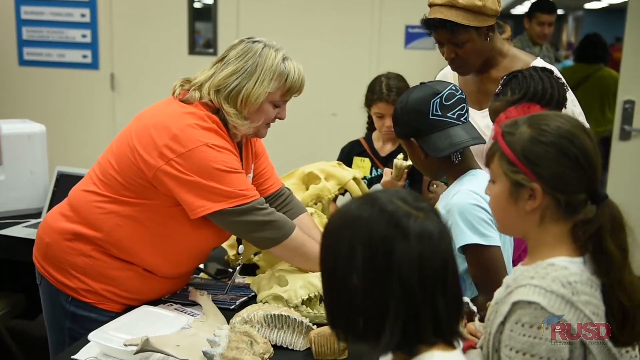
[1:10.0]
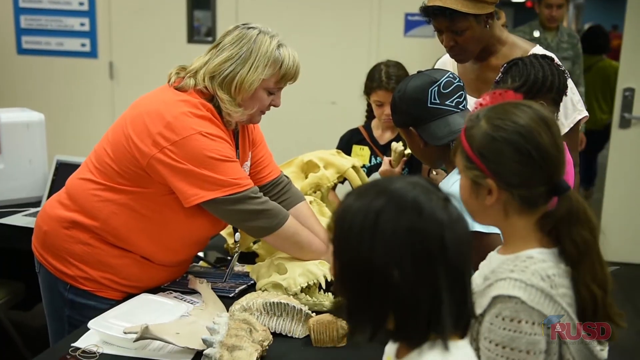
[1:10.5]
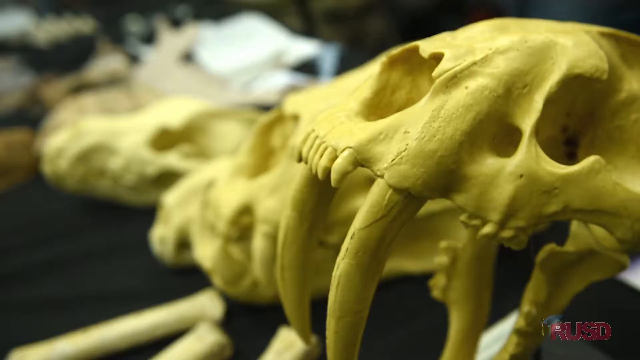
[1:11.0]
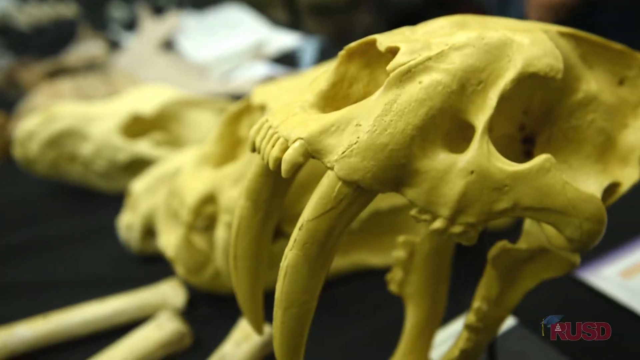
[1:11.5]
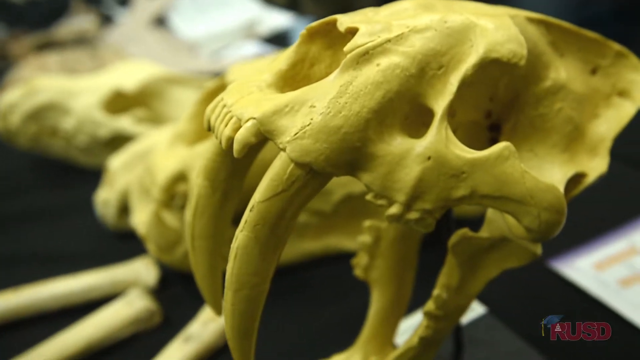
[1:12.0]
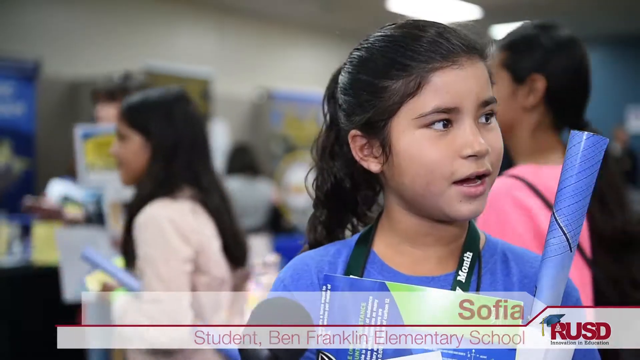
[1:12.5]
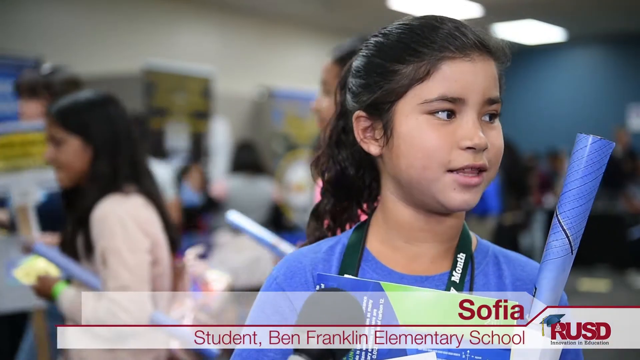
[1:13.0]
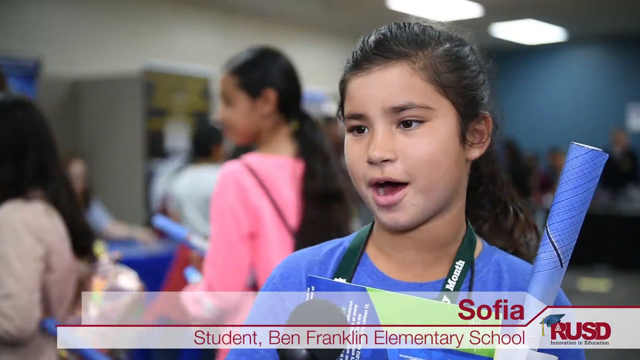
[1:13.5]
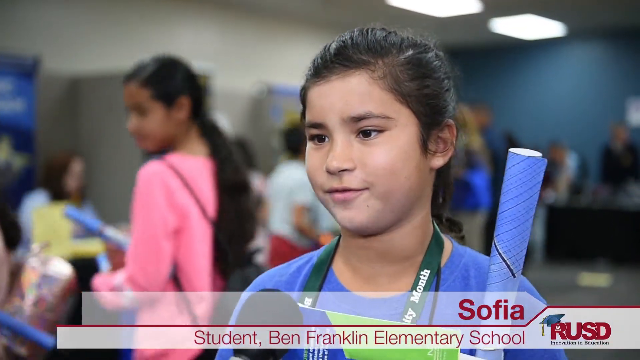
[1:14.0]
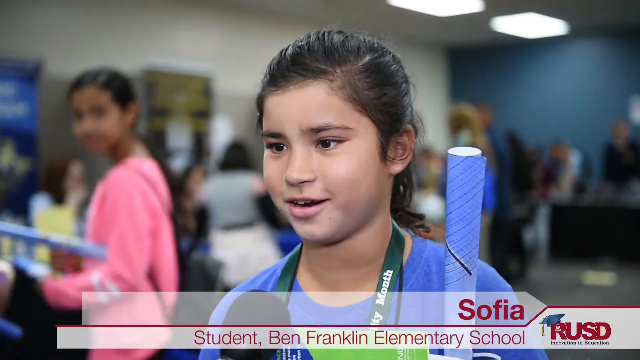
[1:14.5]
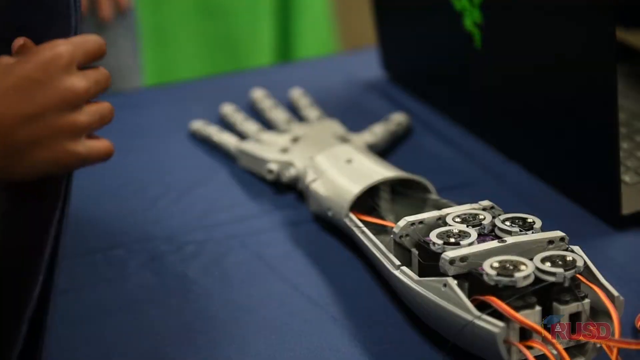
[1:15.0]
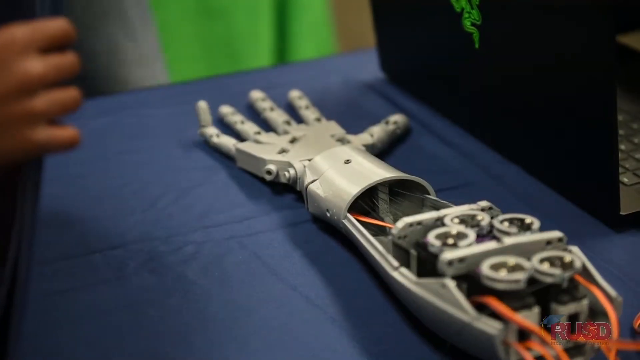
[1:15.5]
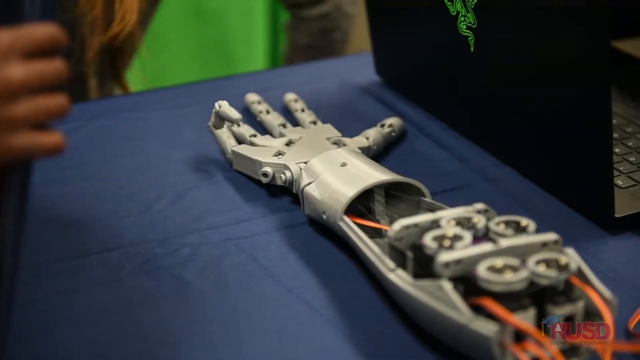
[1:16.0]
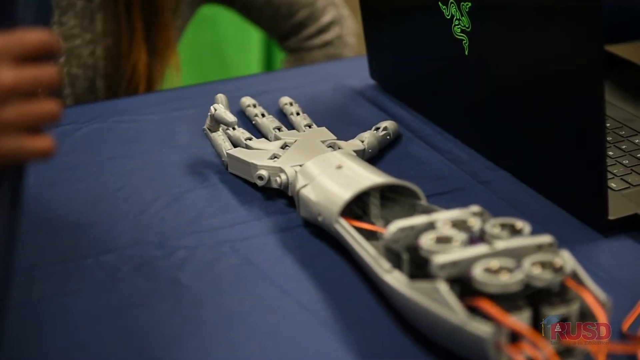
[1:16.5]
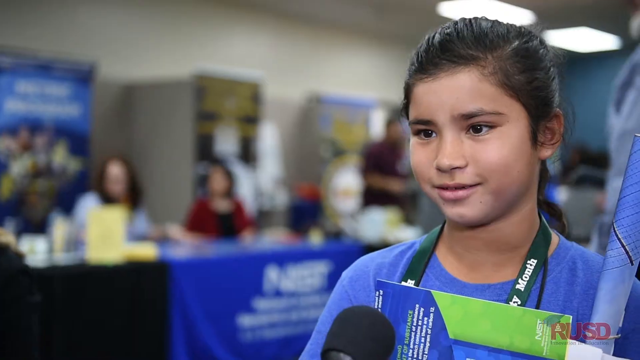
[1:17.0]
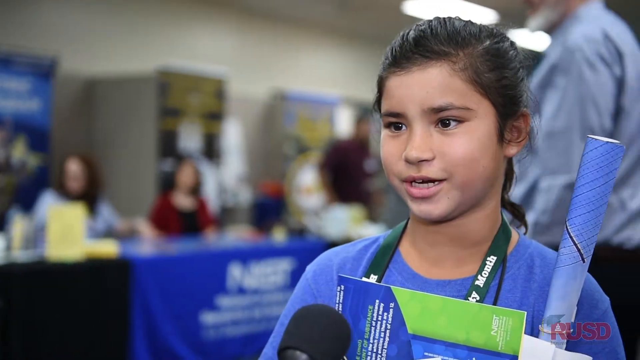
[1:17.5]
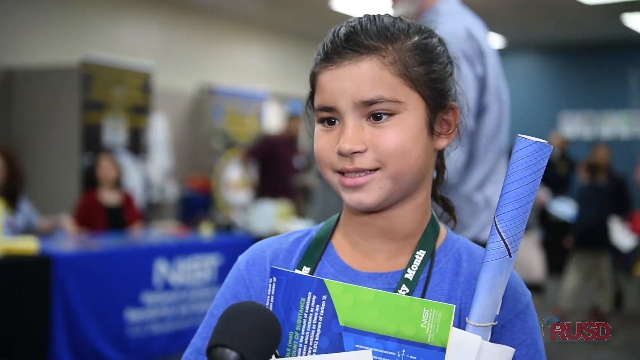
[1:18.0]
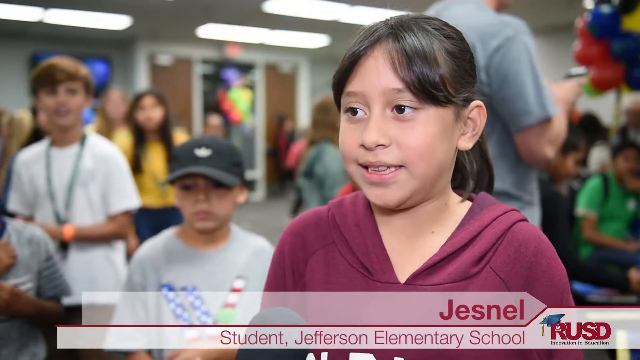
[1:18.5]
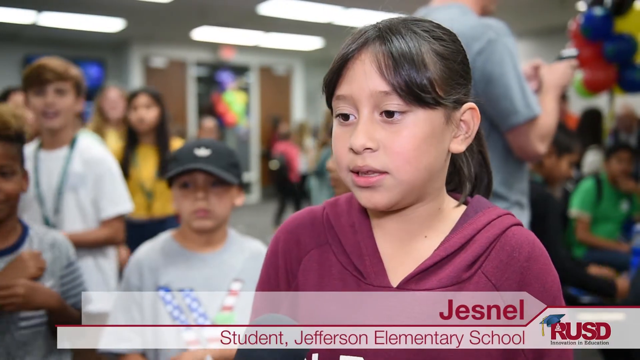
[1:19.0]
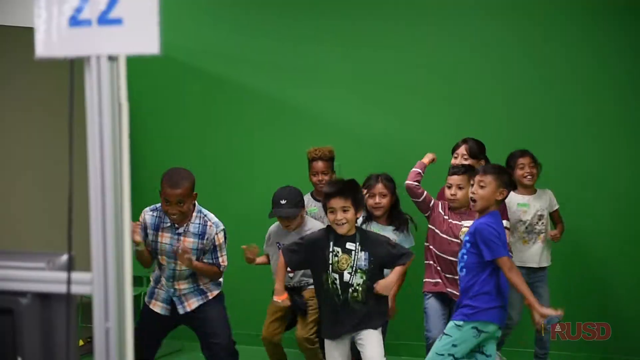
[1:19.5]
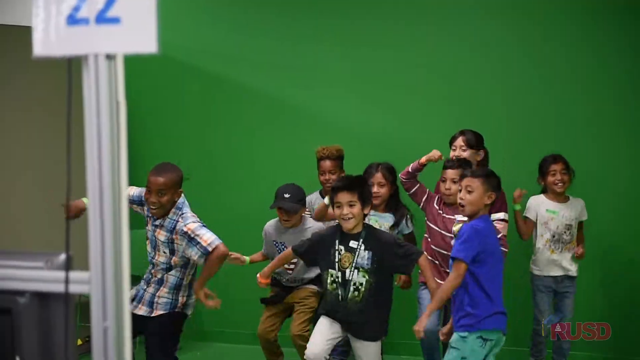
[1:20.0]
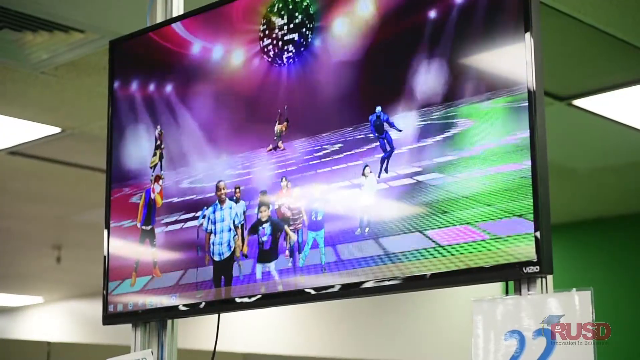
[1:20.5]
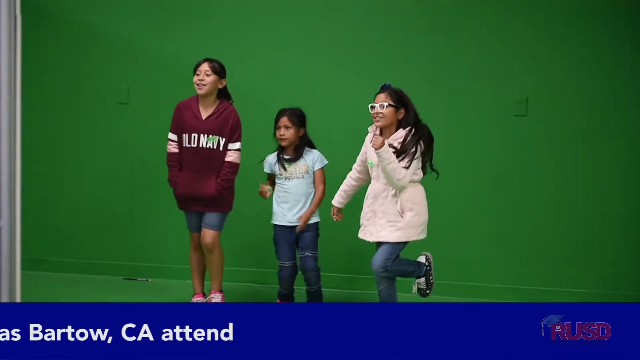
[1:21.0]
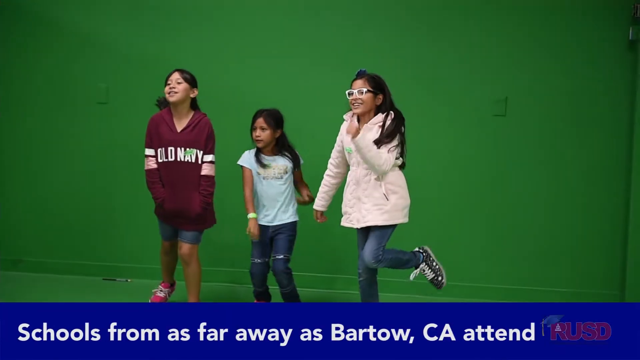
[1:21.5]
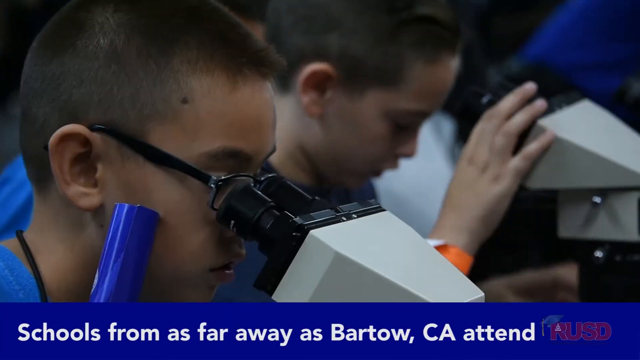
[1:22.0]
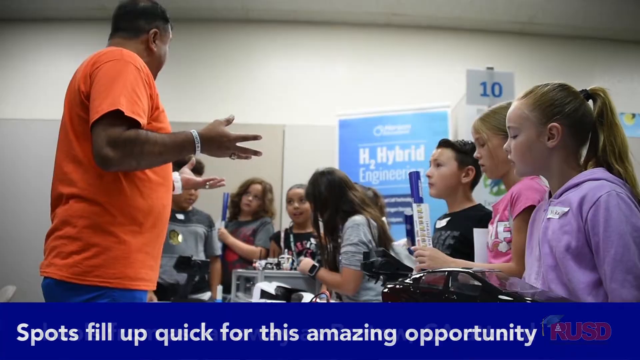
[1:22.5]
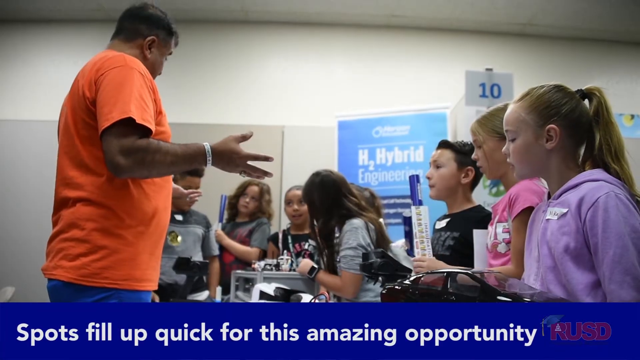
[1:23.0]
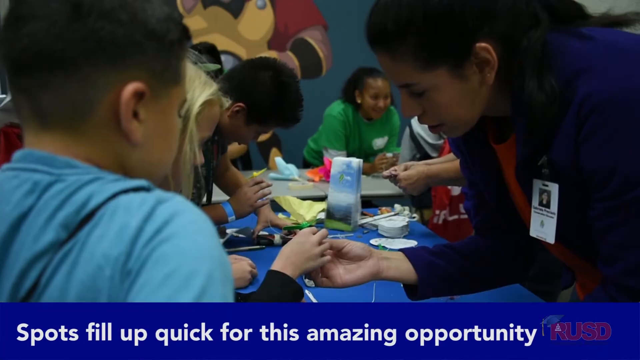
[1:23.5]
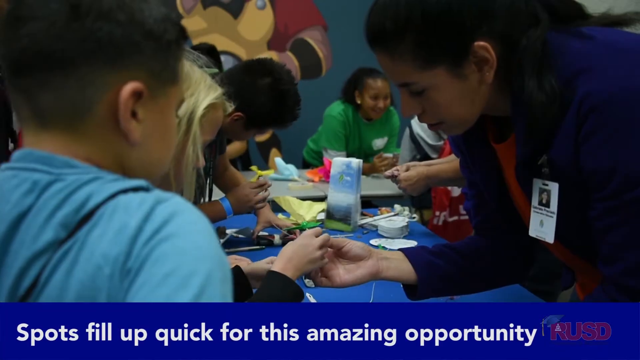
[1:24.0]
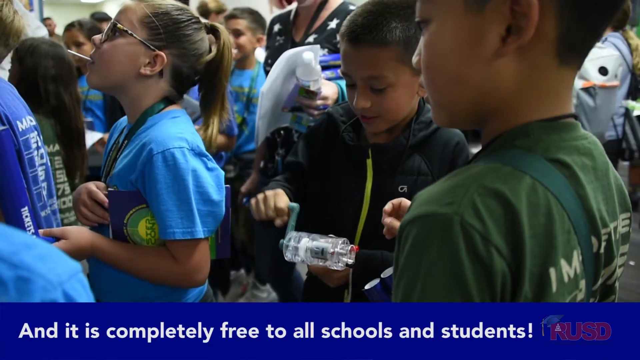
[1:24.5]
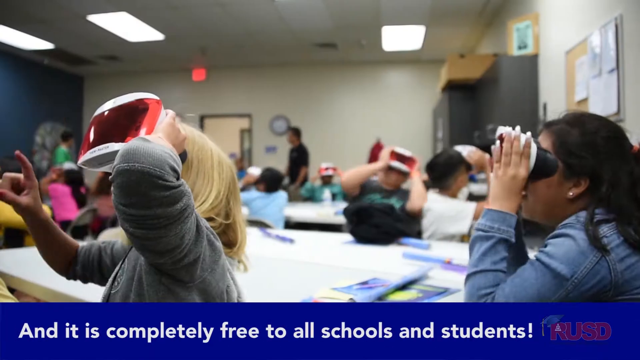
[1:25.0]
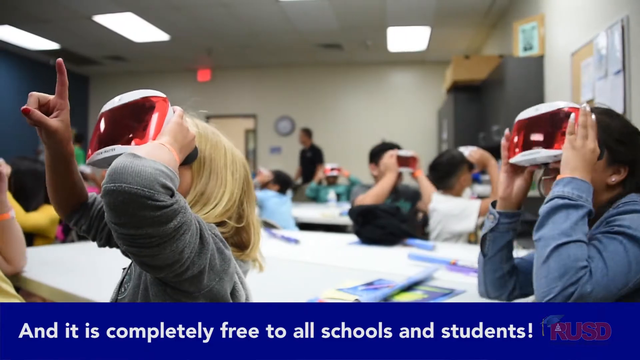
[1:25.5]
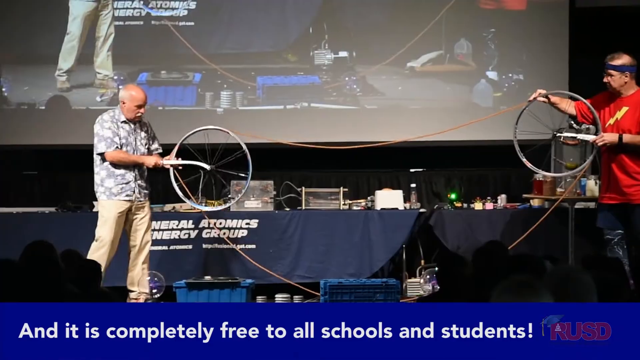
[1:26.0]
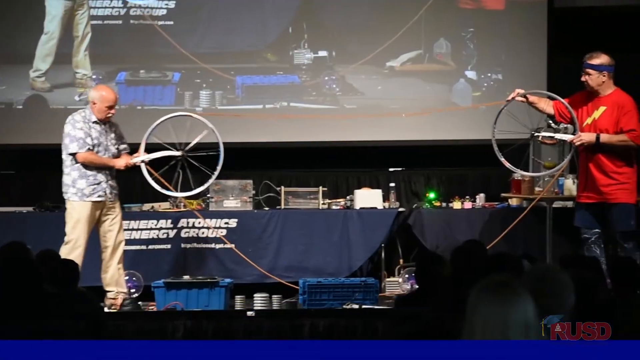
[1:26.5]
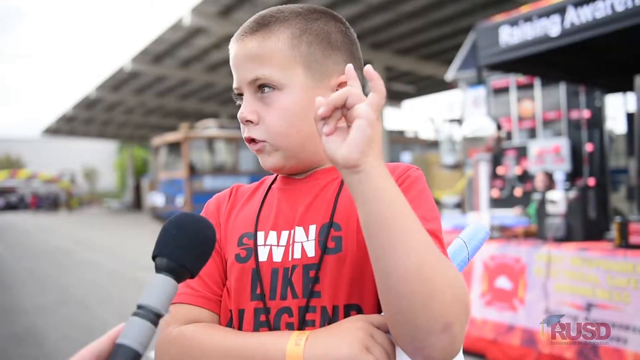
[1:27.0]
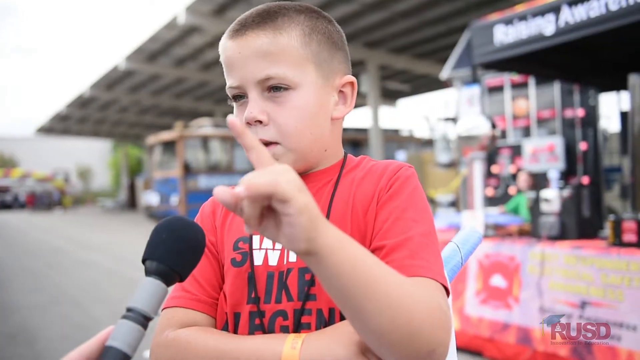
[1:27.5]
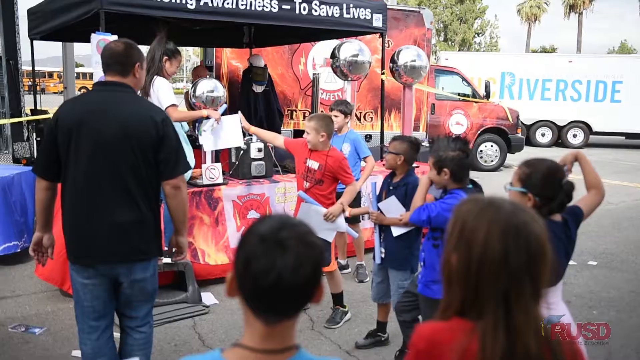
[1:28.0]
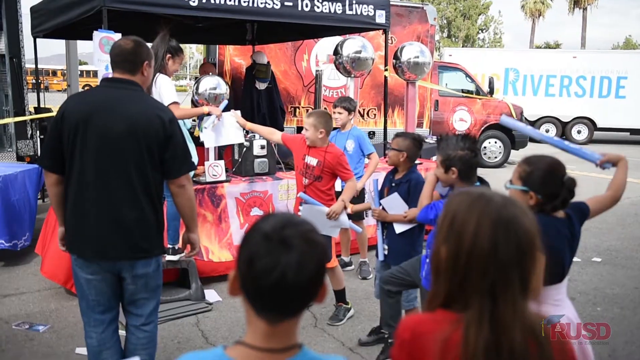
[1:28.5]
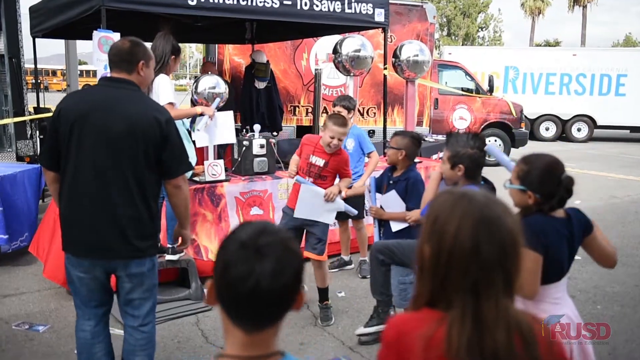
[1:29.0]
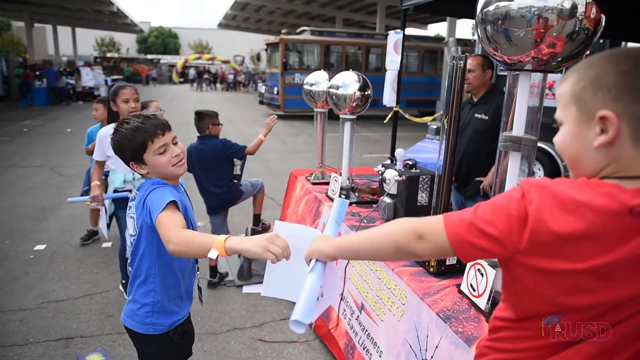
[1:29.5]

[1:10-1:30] At the STEP event at the Borns Inc. facility, a woman shows saber-toothed tiger skulls and smilodon skulls to children gathered around her booth. A girl named Sophia thinks it is really cool. Next comes a robotic arm with pistons, motors and small gears, and a girl named Jesnell is excited to be there. A group of kids dances in front of a green screen while watching themselves on another screen. Children talk and have fun, and some play with electrical diodes and other items to create static electricity. Everyone seems to be enjoying themselves.